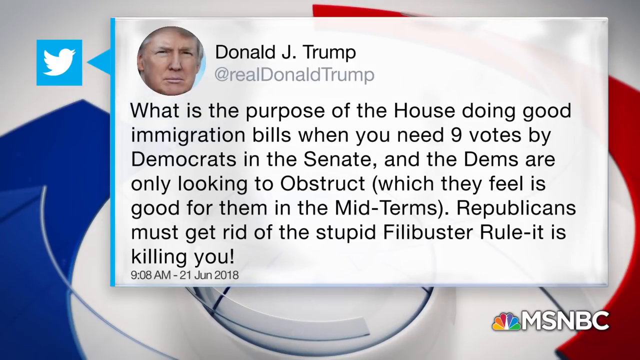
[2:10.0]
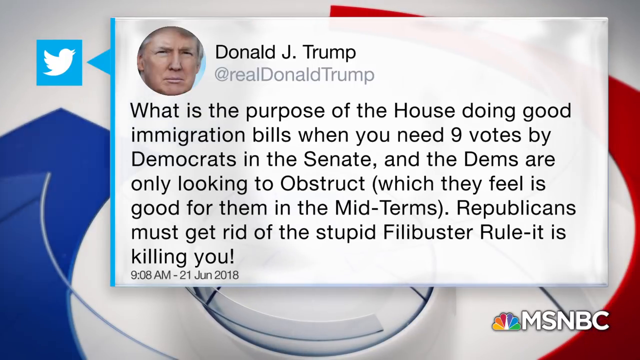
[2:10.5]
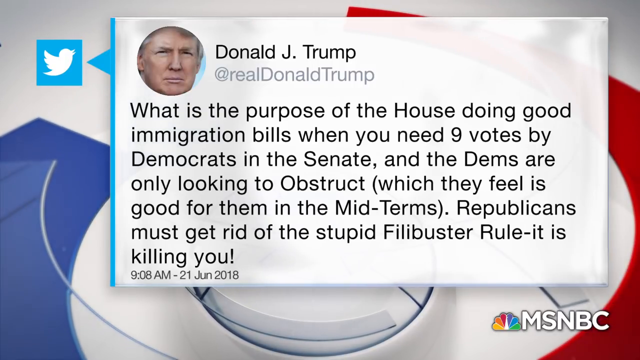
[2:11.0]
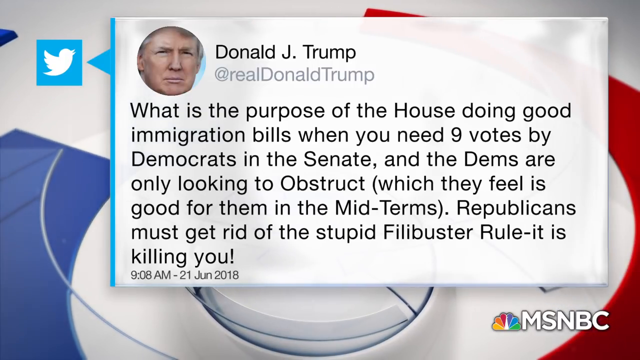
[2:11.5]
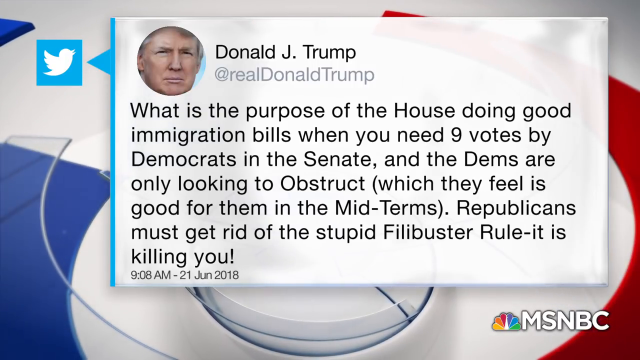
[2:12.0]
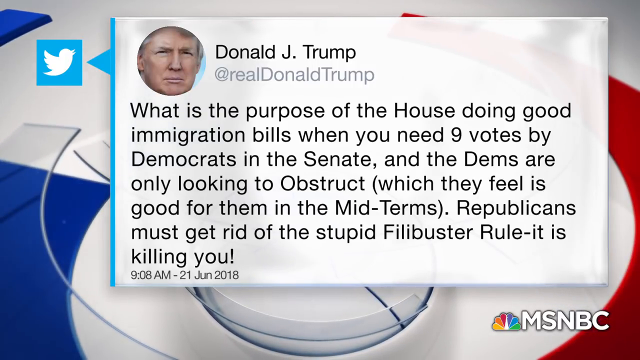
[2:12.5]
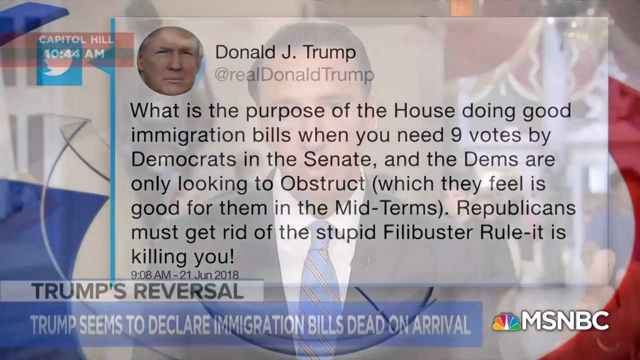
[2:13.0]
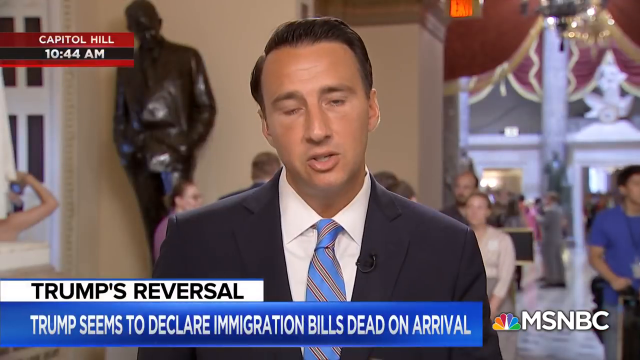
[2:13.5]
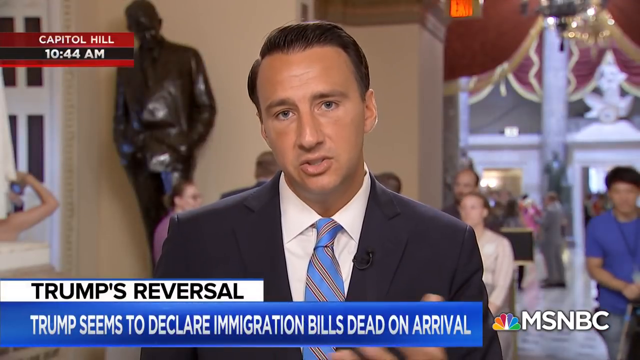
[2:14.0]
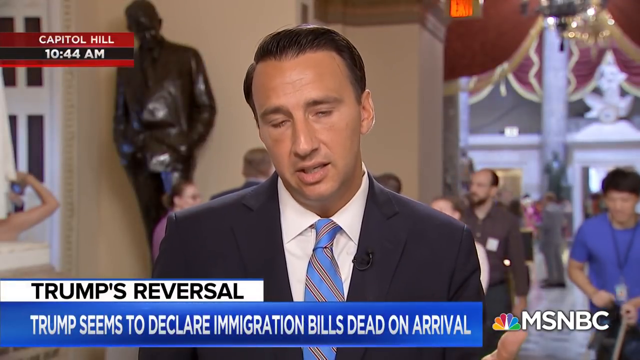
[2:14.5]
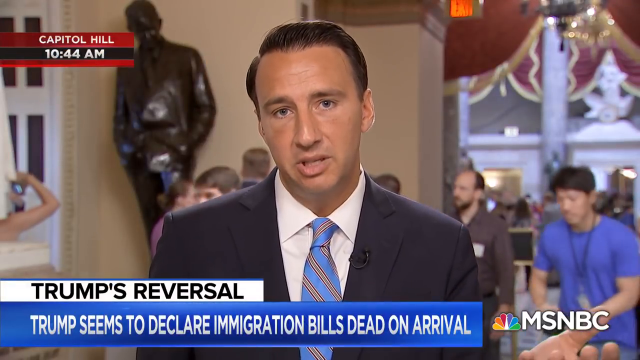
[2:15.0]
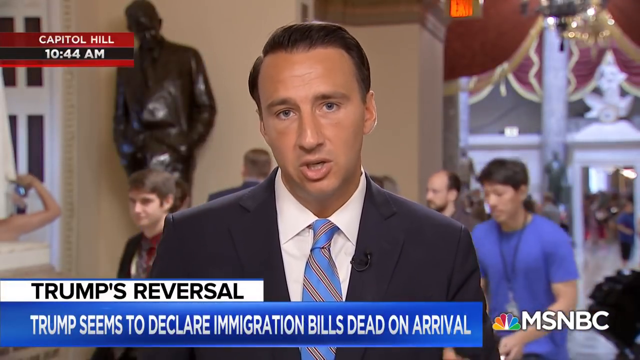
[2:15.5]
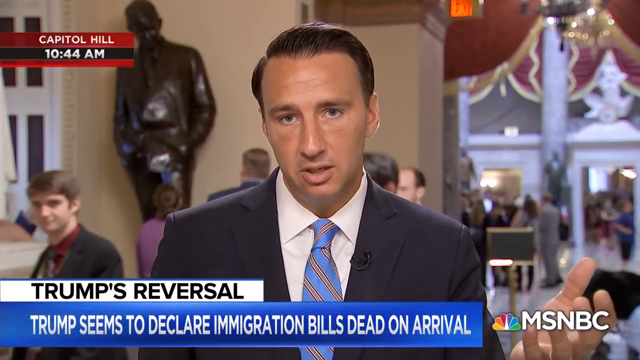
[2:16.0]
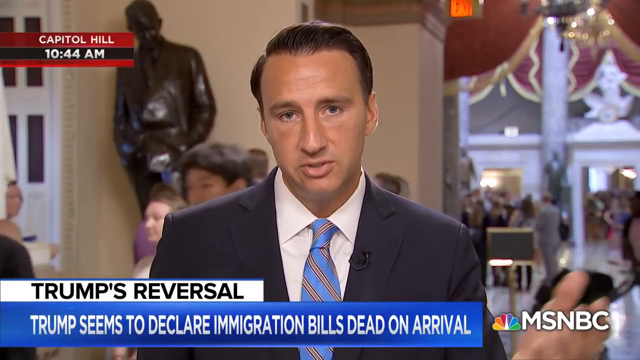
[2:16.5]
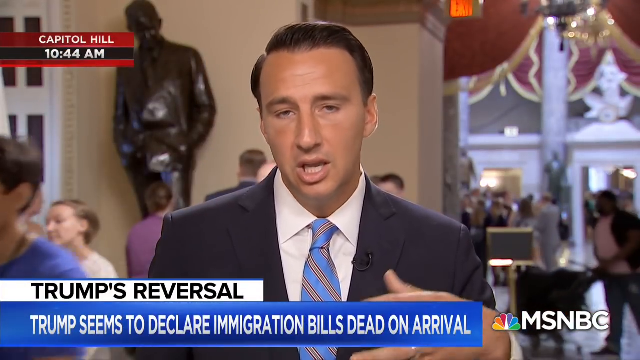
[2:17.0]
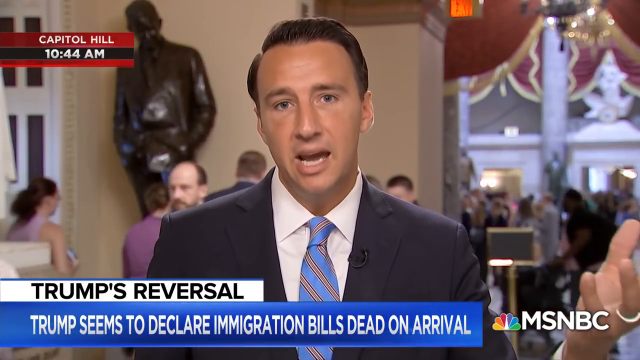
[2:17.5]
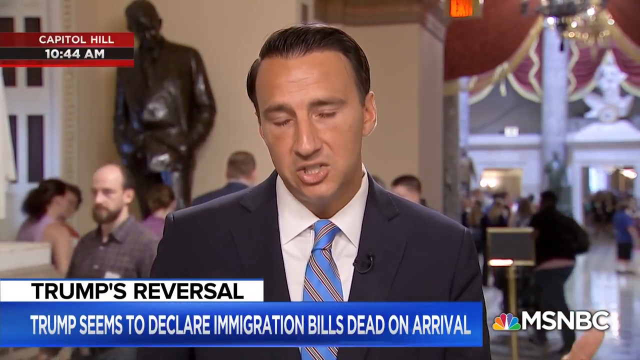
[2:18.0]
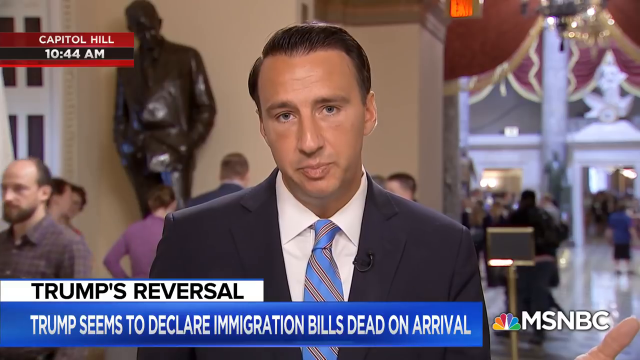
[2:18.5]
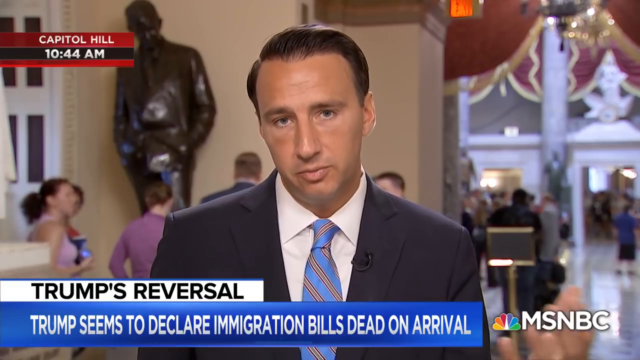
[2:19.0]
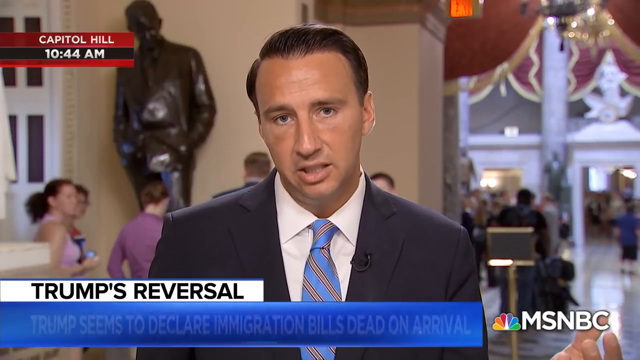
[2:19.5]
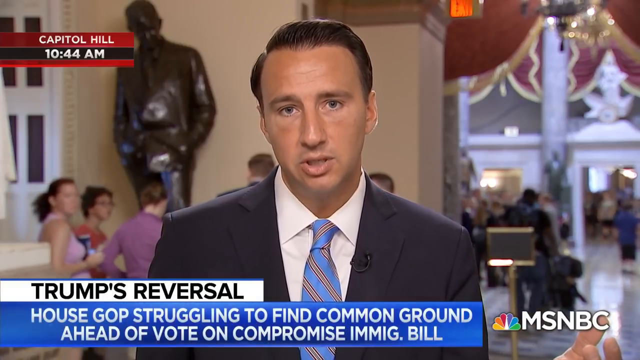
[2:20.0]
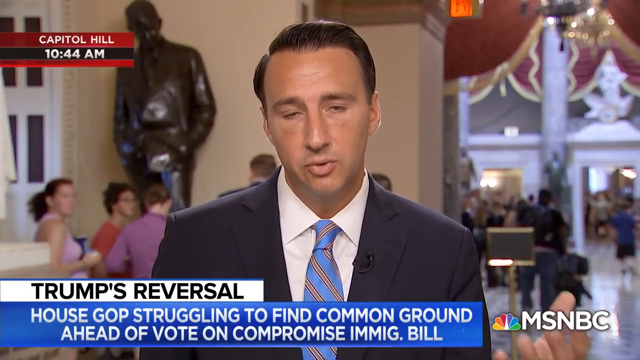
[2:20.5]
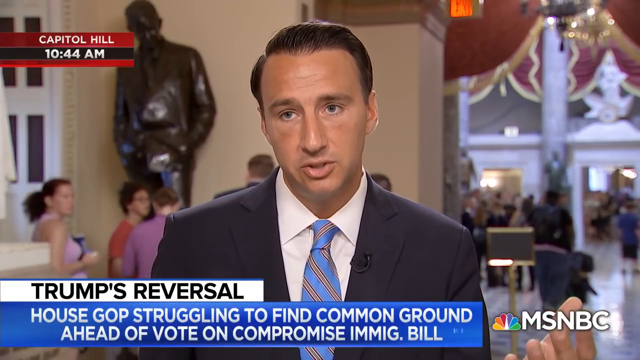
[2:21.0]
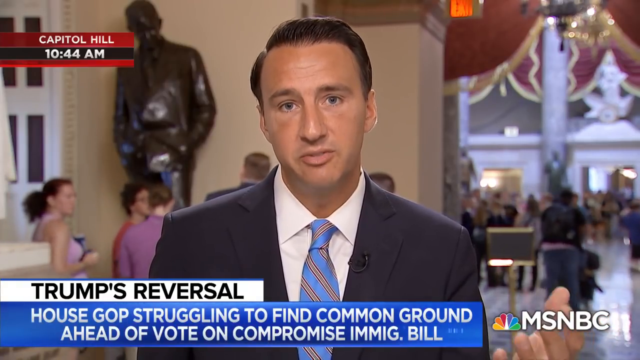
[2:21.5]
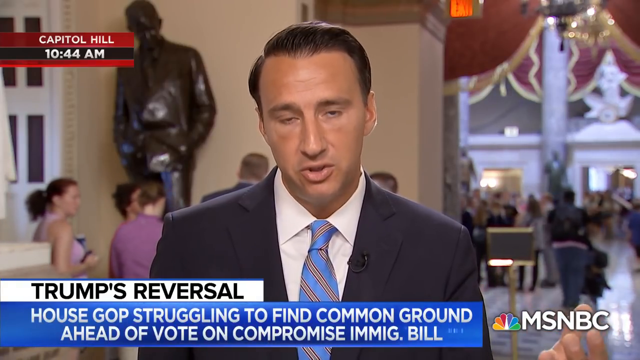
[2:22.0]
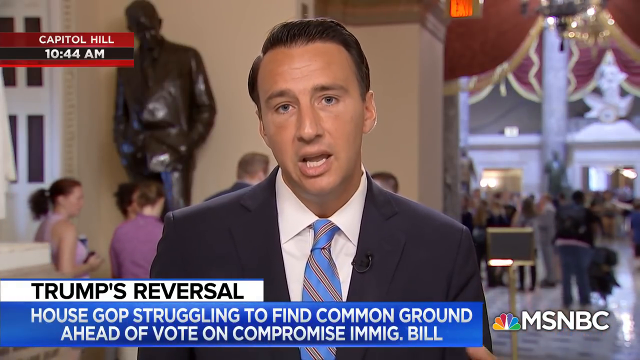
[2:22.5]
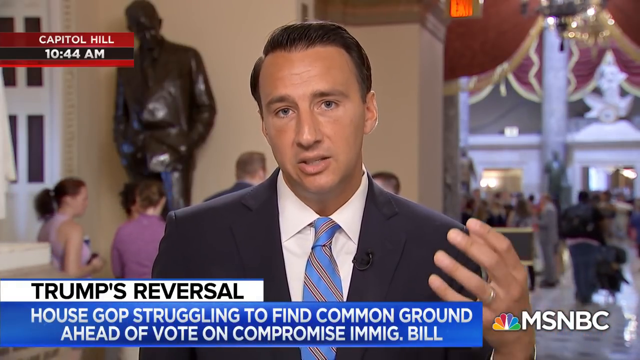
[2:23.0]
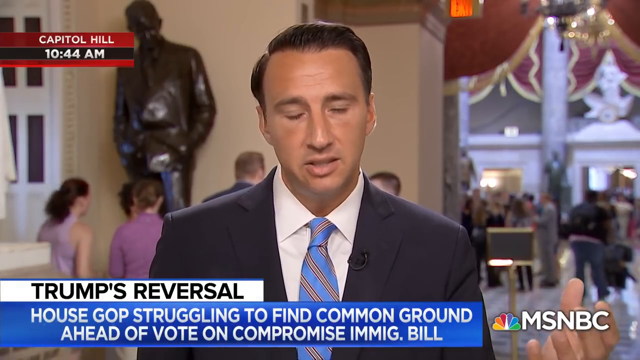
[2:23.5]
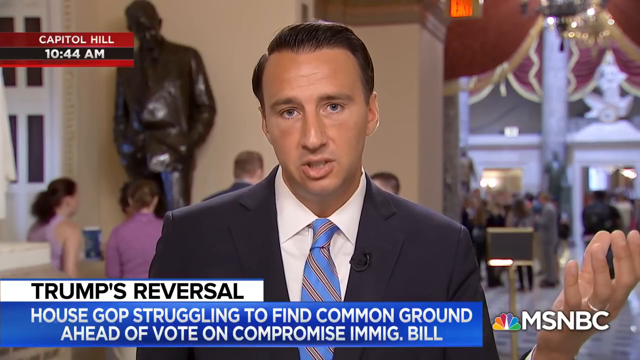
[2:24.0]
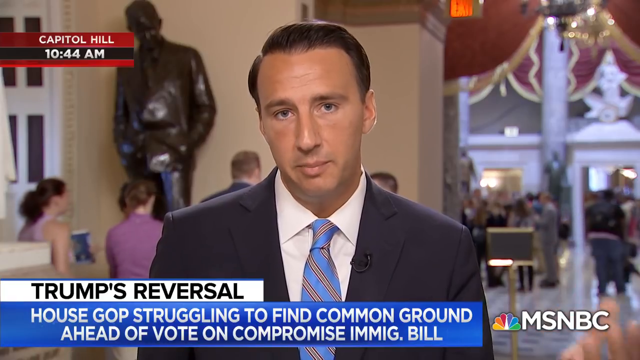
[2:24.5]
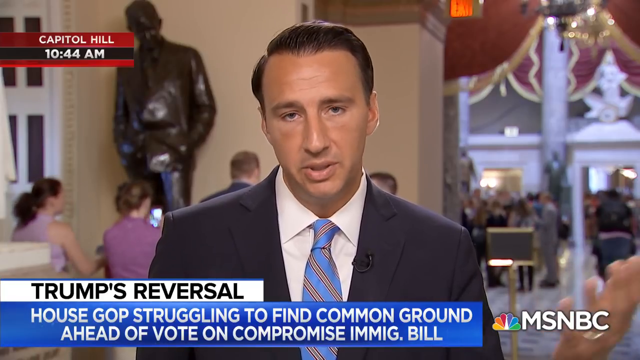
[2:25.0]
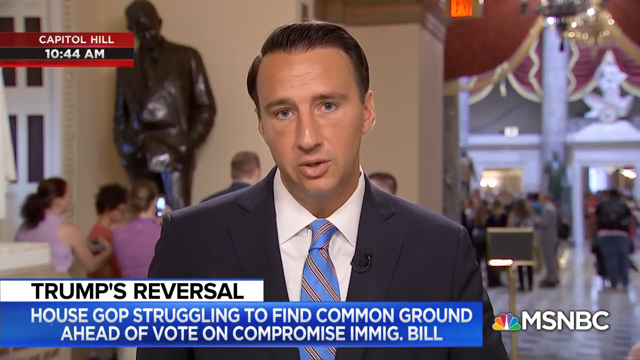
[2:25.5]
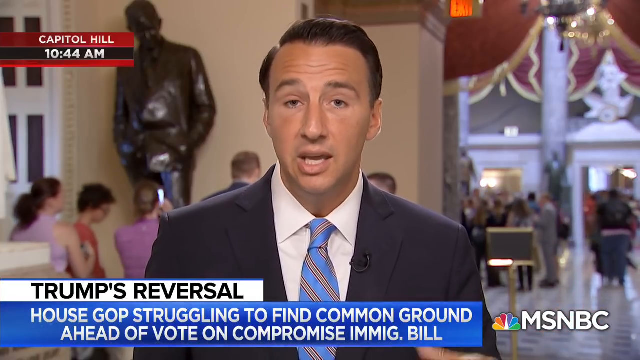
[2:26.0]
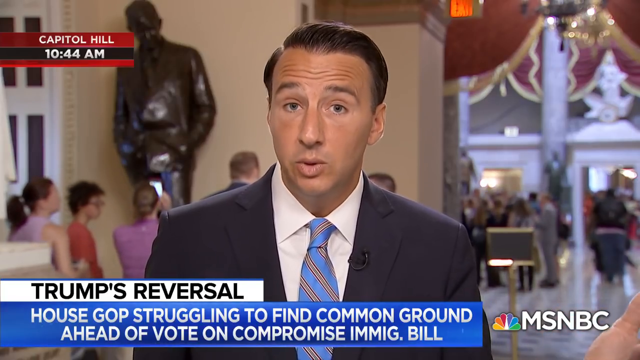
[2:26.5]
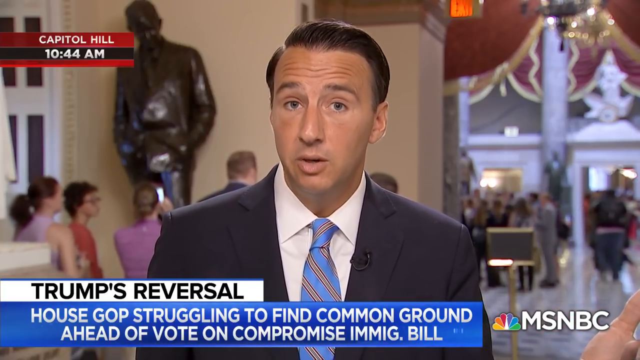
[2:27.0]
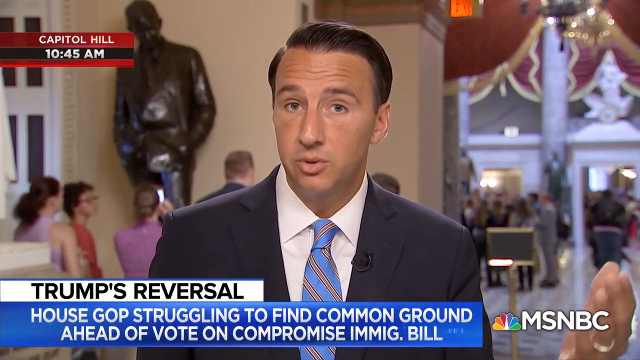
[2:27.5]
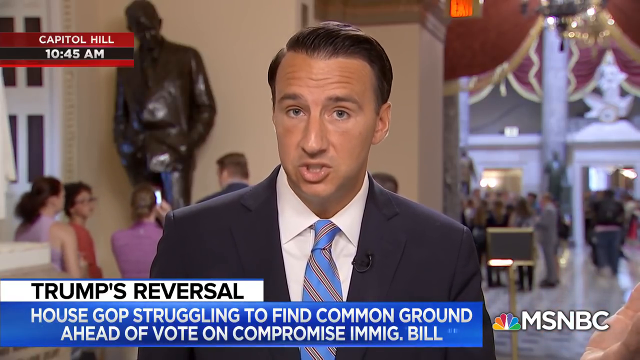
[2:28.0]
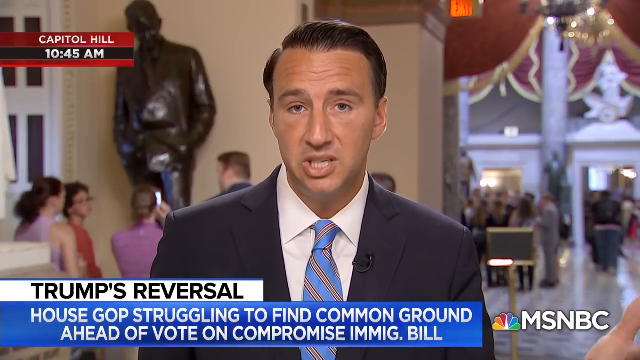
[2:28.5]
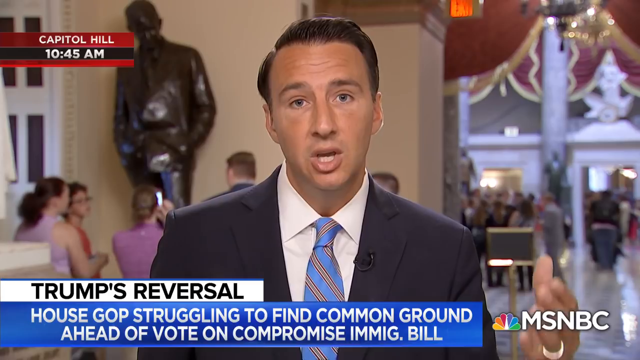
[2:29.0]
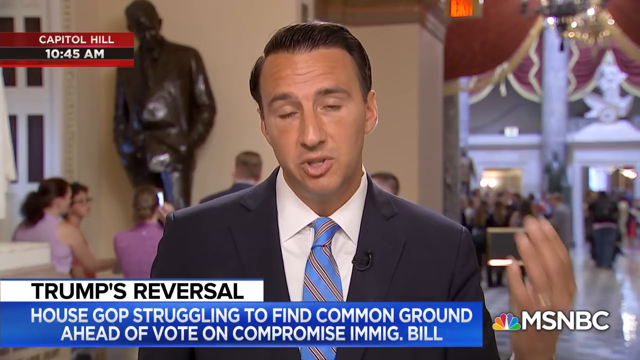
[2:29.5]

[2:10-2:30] The graphic of Trump's tweet about the filibuster rule is on screen, and then the video goes back to Representative Costello. The top left corner says "Capitol Hill" and "10:44 AM". He is now shown full screen, with more visitors to the Capitol building in the background, at least seven of them in the mid-ground. One person on the left is taking a photo of one of the statues, a person on the right in a blue shirt has a name badge hanging from a lanyard, possibly a congressional staffer, and another person walks past with what is apparently a stroller. The news crawl now reads "GOP struggling to find common ground ahead of vote on compromise immig bill", with "immig" short for immigration. The congressperson keeps gesturing with his left hand, now turned palm upward, no longer looking angry, almost as if throwing his hand out, gesturing repeatedly.